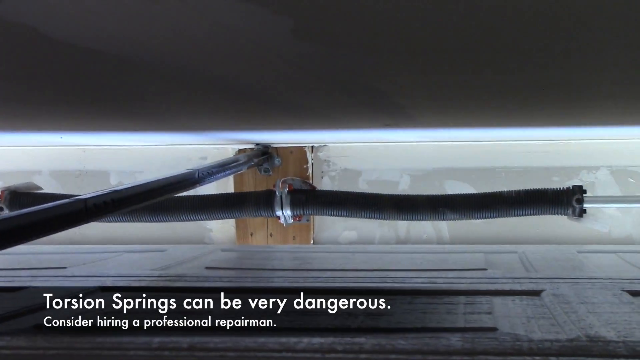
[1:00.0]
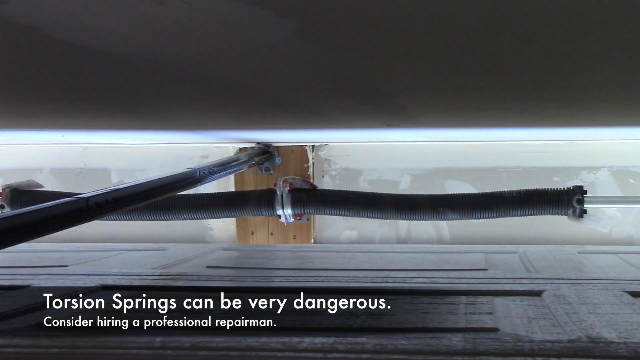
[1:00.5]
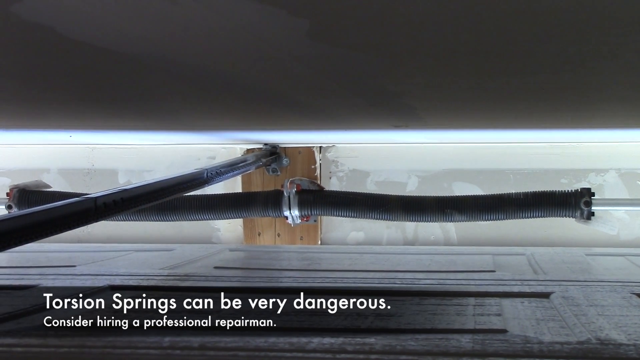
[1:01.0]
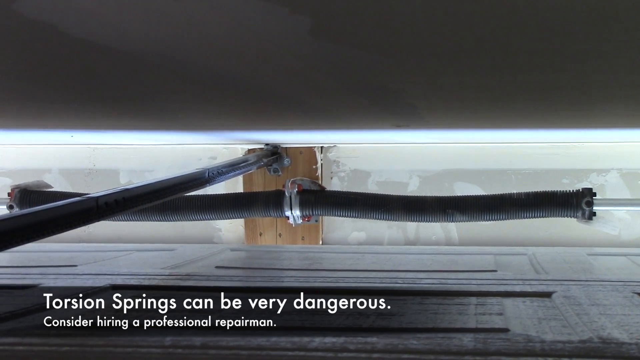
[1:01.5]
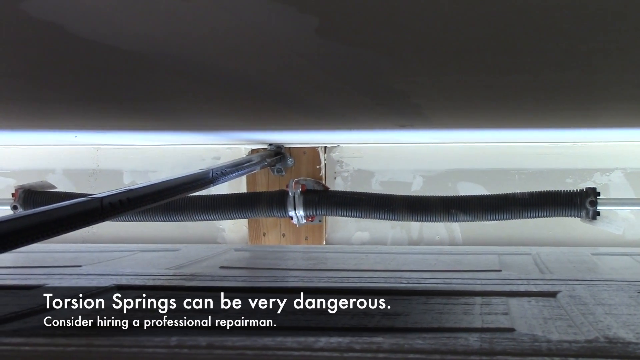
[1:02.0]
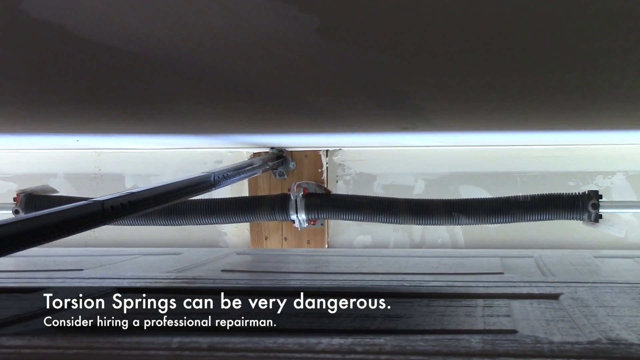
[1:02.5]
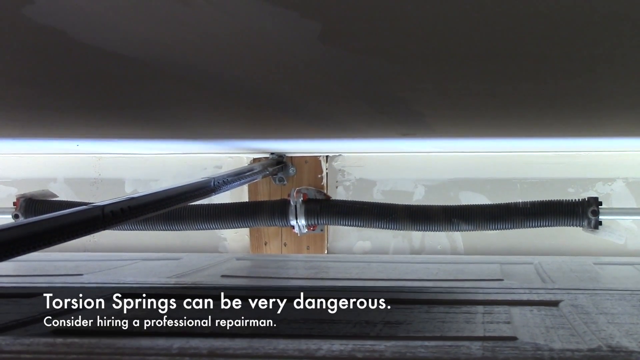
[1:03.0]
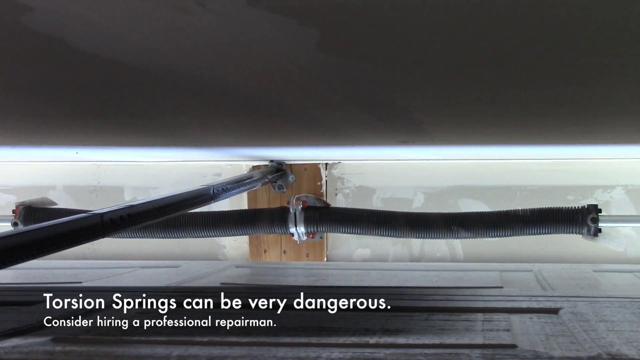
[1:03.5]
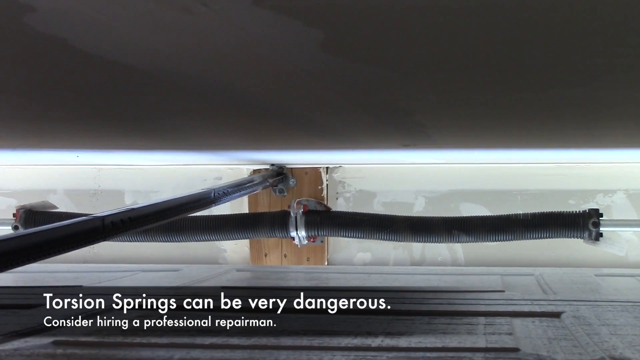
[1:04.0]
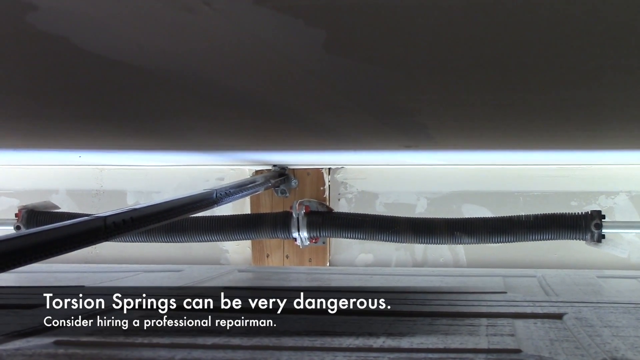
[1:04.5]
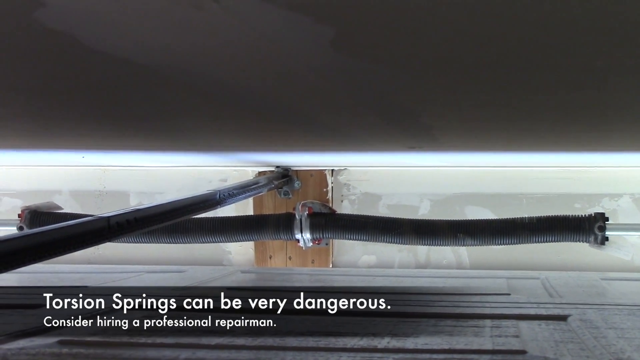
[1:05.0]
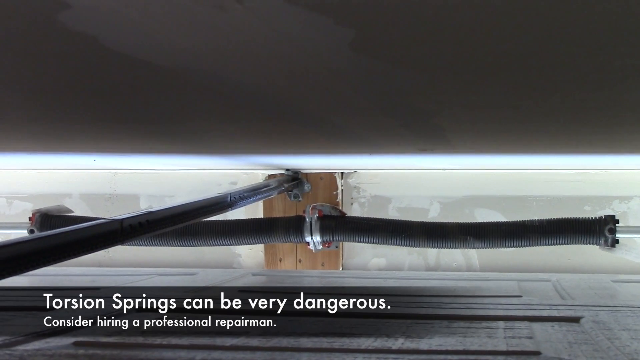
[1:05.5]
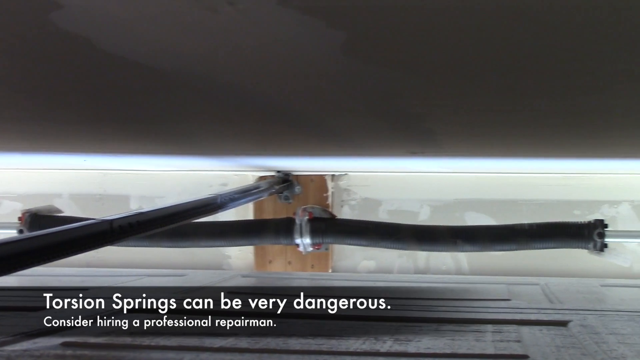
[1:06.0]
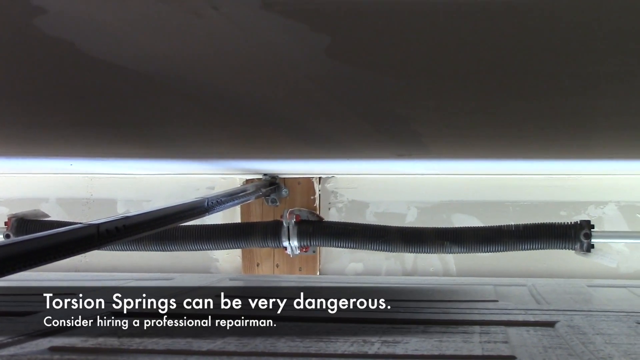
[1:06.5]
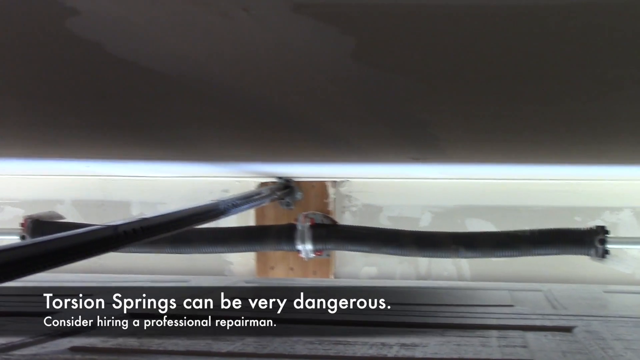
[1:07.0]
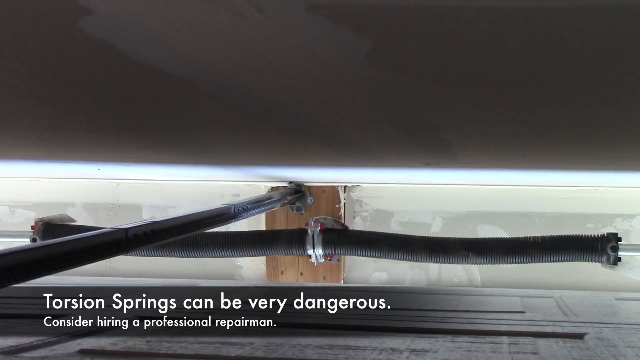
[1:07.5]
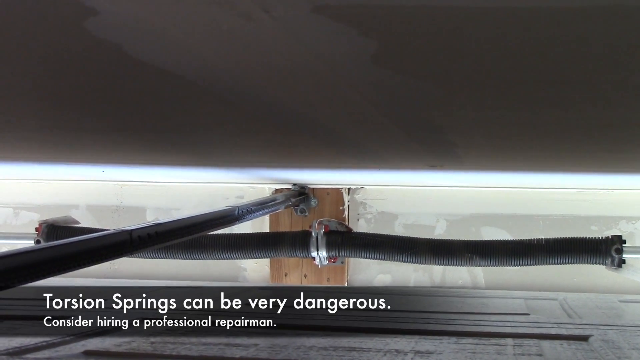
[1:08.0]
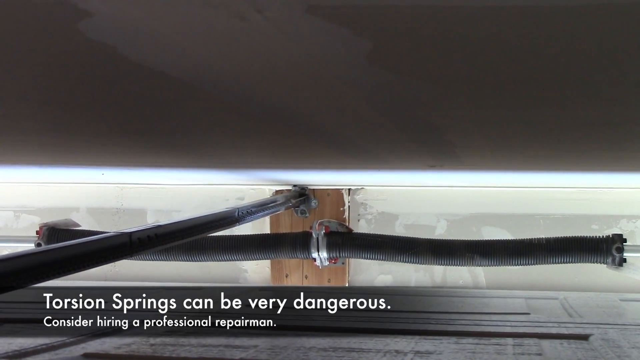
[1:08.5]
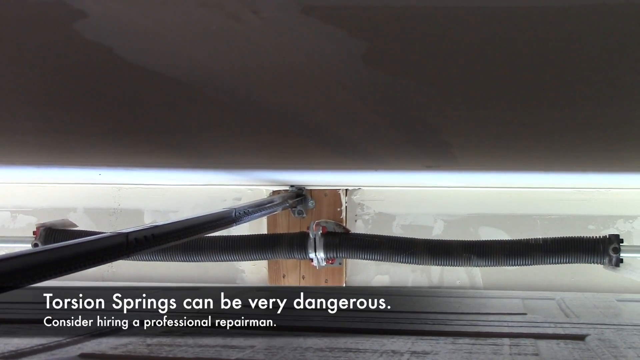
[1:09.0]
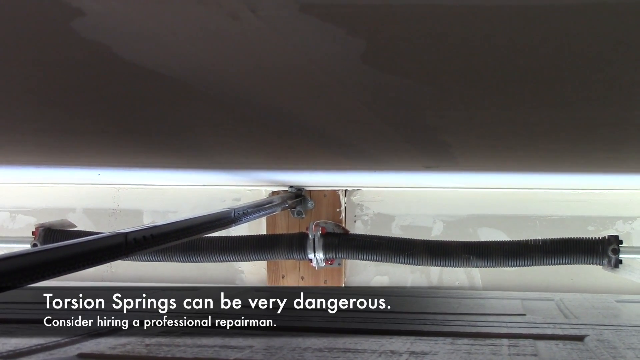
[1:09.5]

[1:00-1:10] A close-up shows the garage door springs, which look to be what rotates to pull the garage door up and send it along the ceiling toward the back of the garage. The on-screen text reads "torsion springs can be very dangerous," and under it "consider hiring a professional repairman." The springs are black and kind of elongated along a rod that runs from left to right. The garage door is not moving.